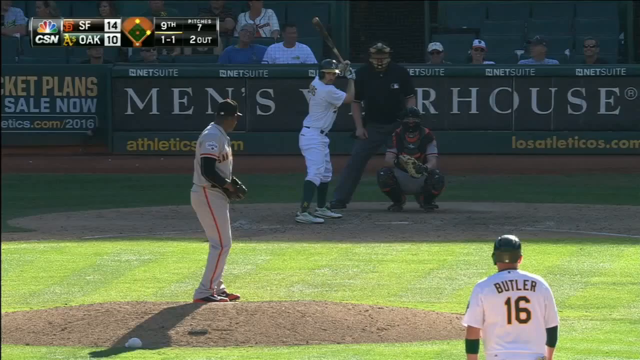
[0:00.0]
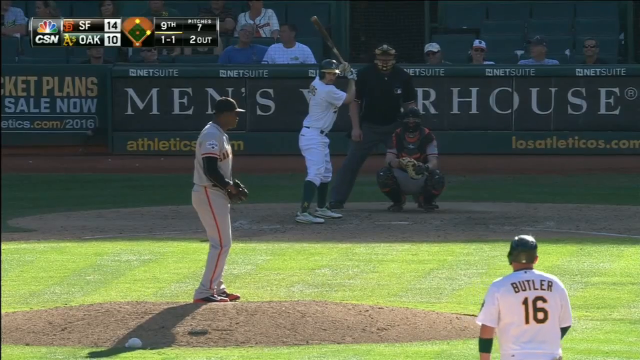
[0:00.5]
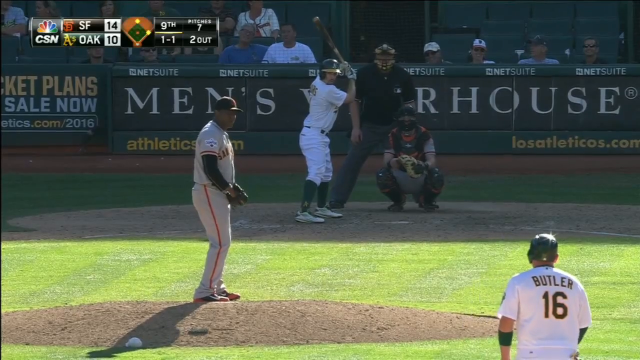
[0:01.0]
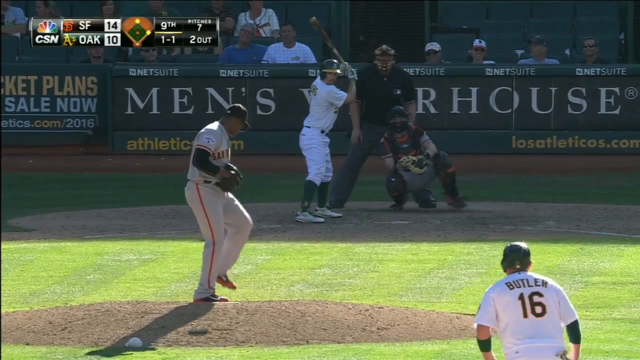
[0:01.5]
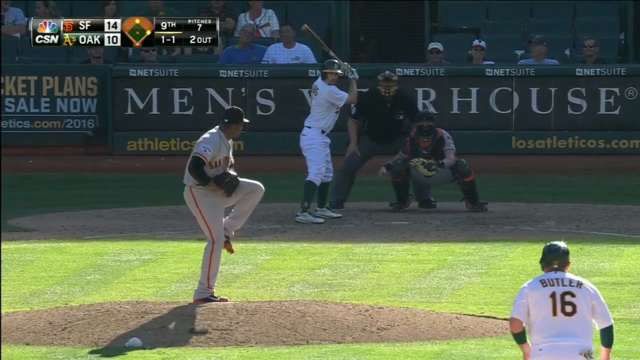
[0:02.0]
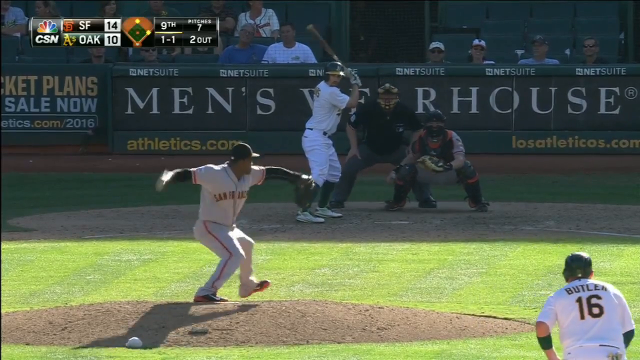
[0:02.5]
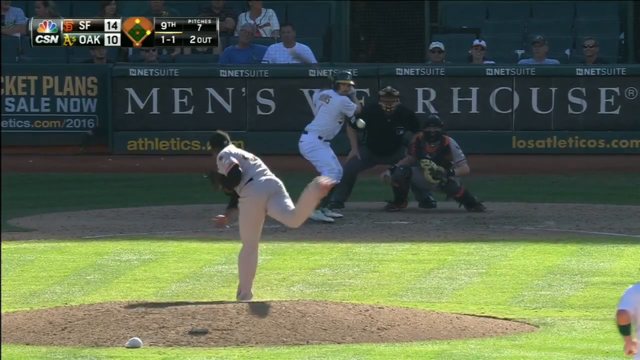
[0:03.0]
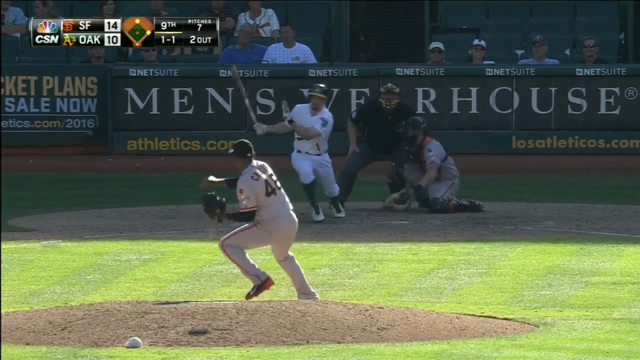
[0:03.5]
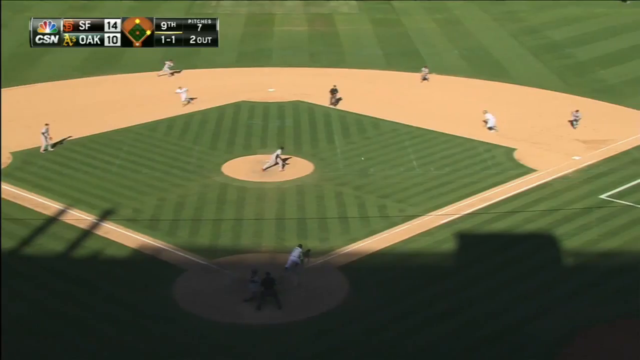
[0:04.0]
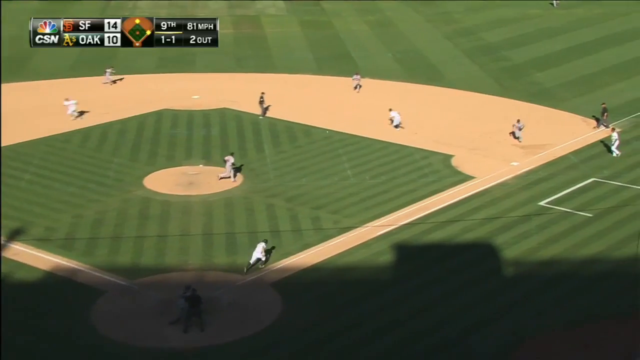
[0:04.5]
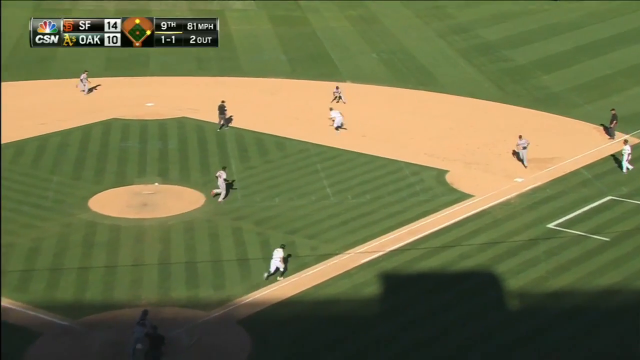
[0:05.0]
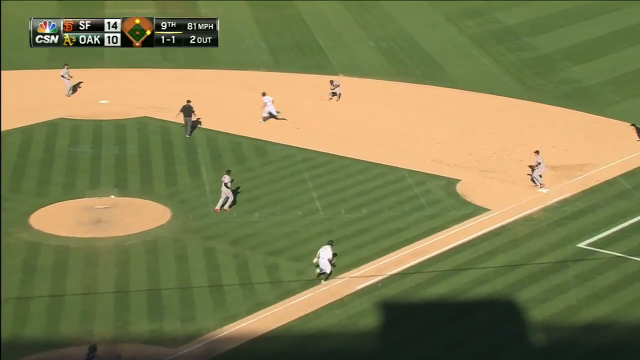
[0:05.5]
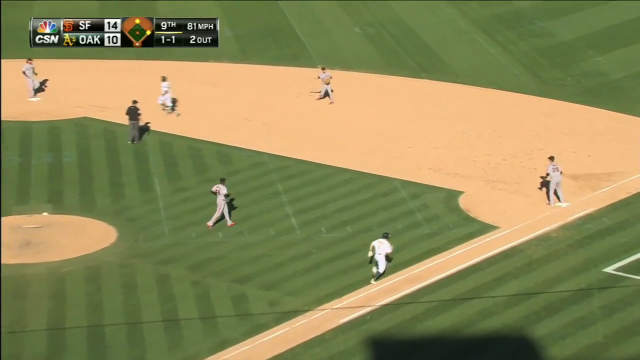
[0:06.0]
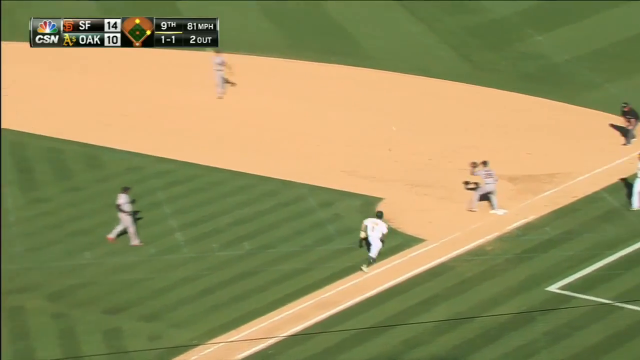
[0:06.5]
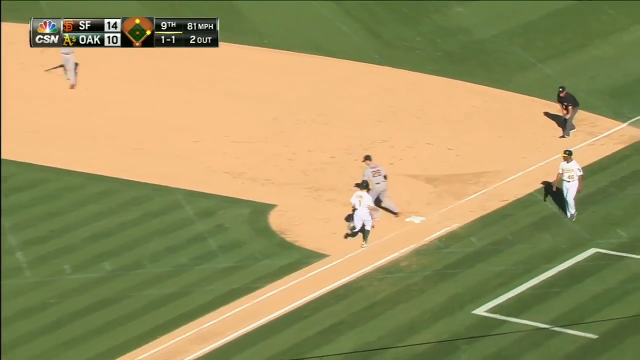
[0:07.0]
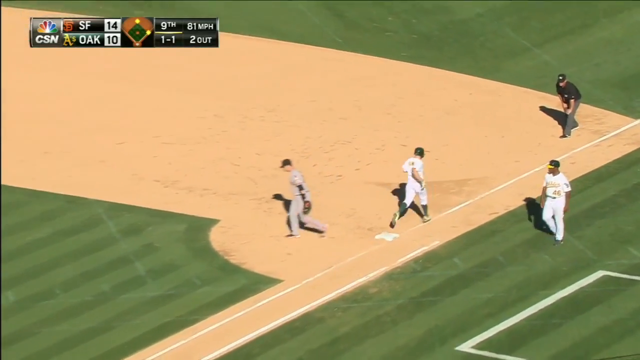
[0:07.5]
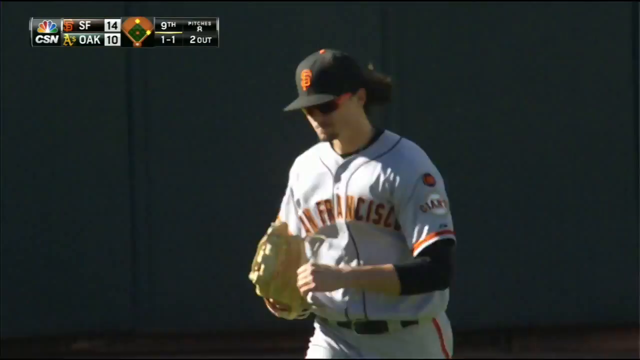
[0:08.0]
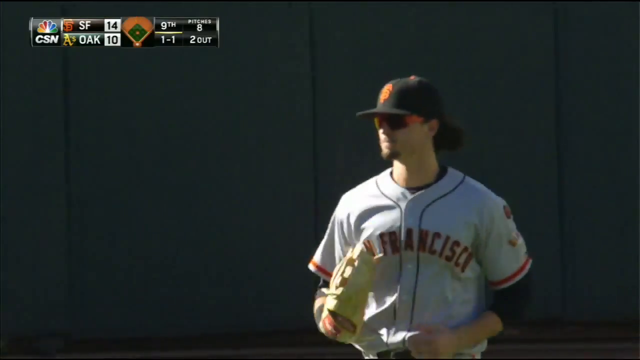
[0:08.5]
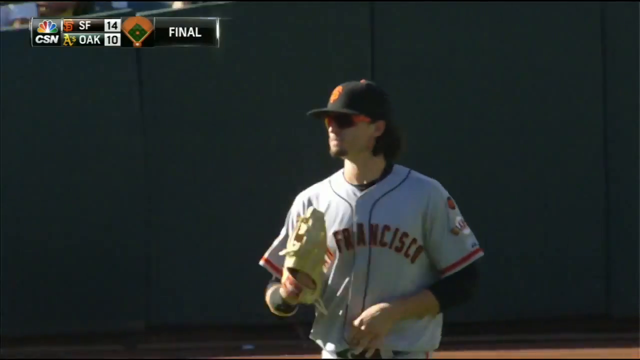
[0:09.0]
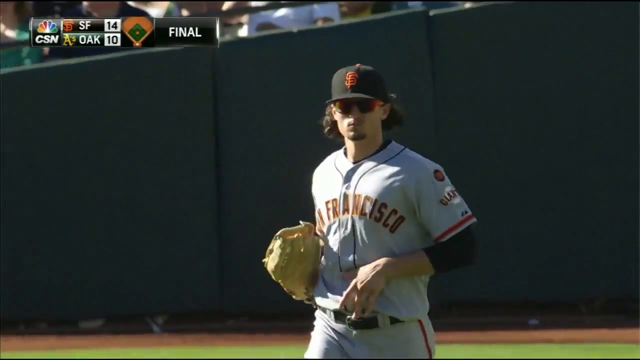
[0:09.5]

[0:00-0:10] A baseball game appears to be San Francisco versus Oakland, in the ninth inning, with the score apparently 14 to 10. The pitcher gets ready and winds up while the batter stands with his bat up over his head. The pitcher throws, and the batter swings and connects, sending a slow ground ball between first and second. The ball is quickly grabbed and passed to first base, where the runner is out. The runner continues a few extra feet and drops his head in disappointment.